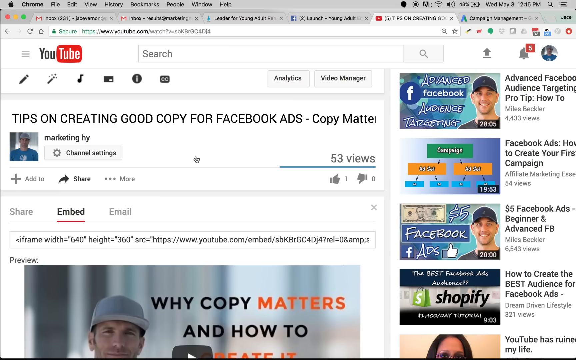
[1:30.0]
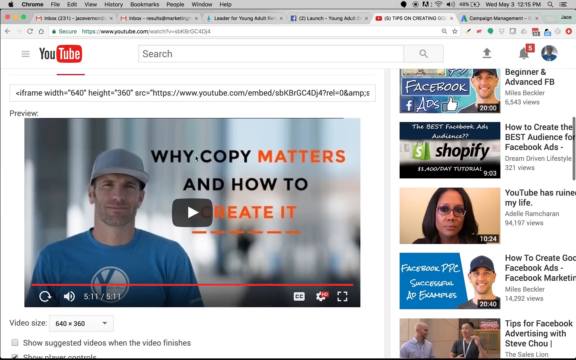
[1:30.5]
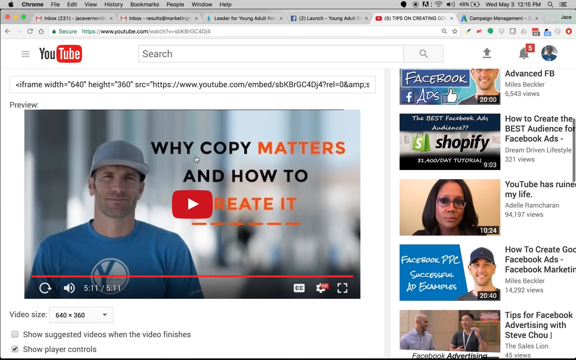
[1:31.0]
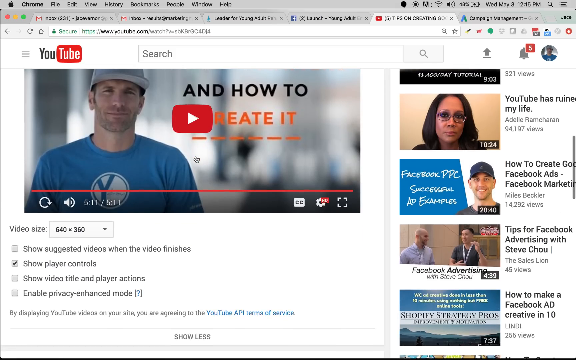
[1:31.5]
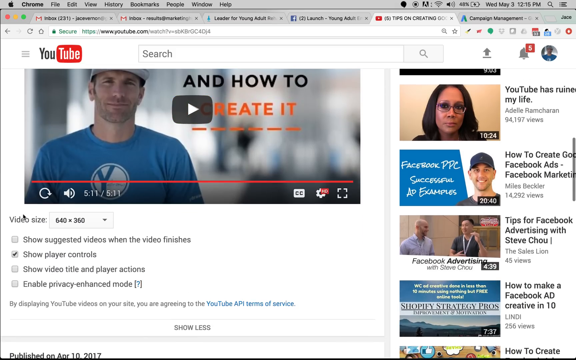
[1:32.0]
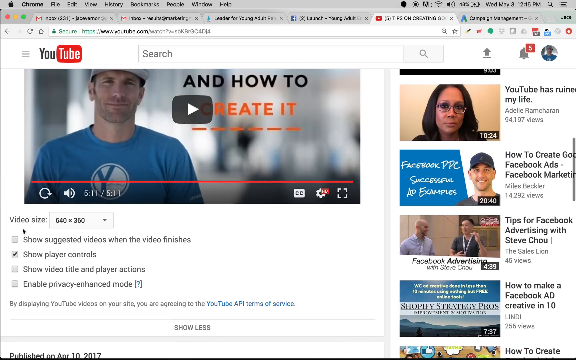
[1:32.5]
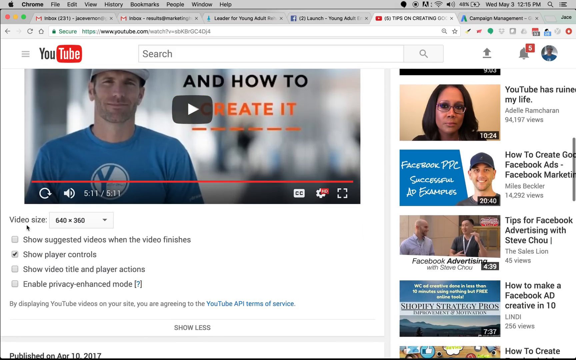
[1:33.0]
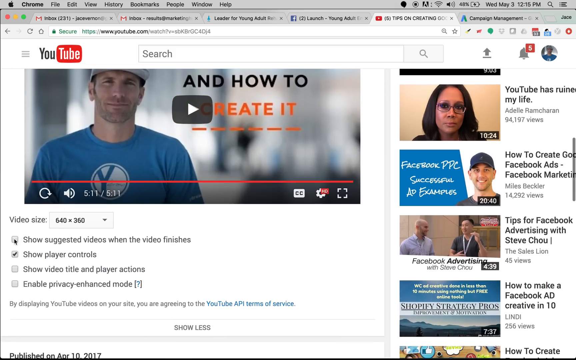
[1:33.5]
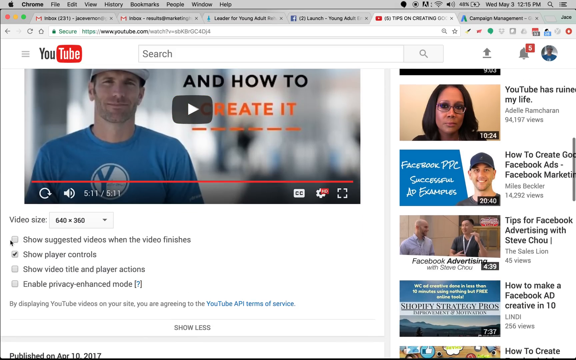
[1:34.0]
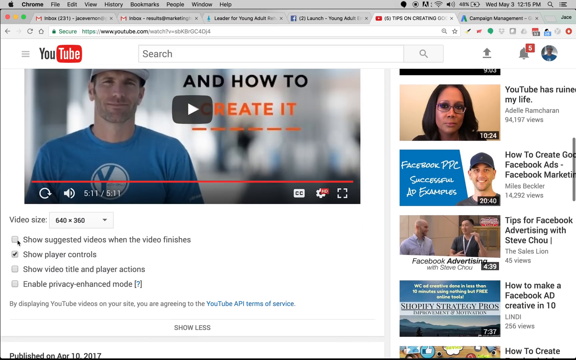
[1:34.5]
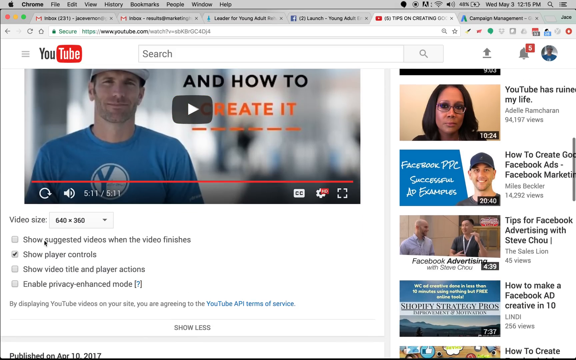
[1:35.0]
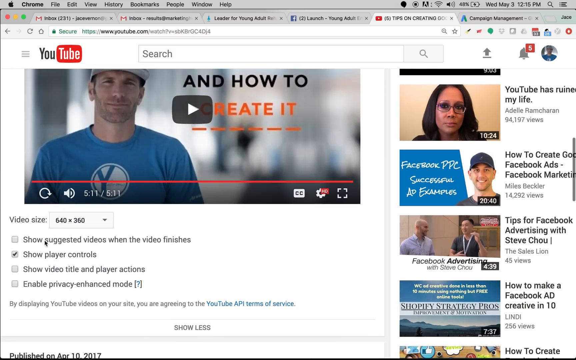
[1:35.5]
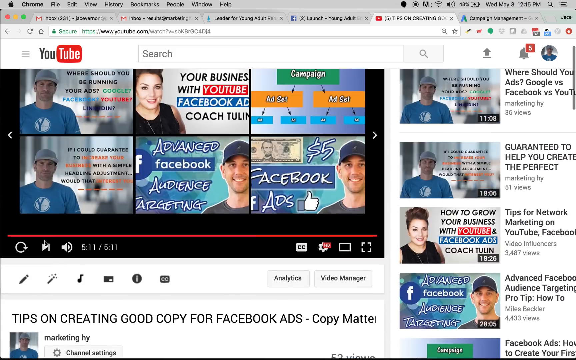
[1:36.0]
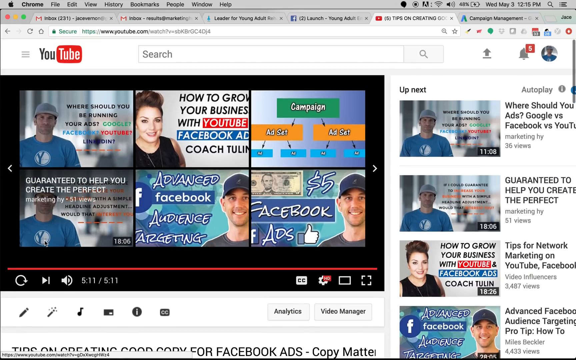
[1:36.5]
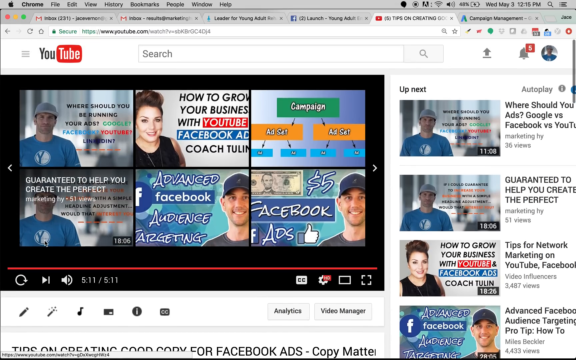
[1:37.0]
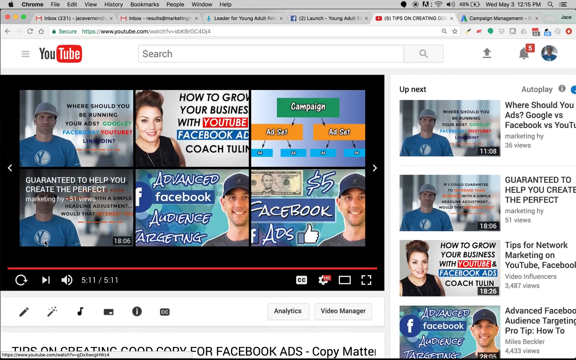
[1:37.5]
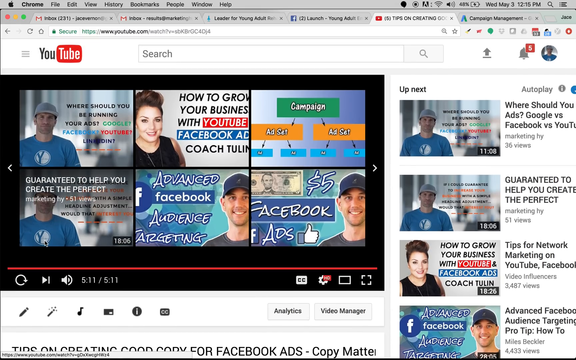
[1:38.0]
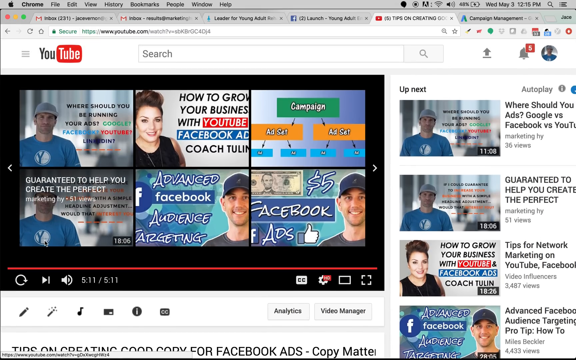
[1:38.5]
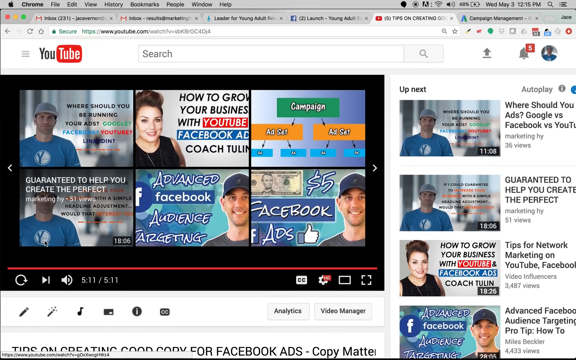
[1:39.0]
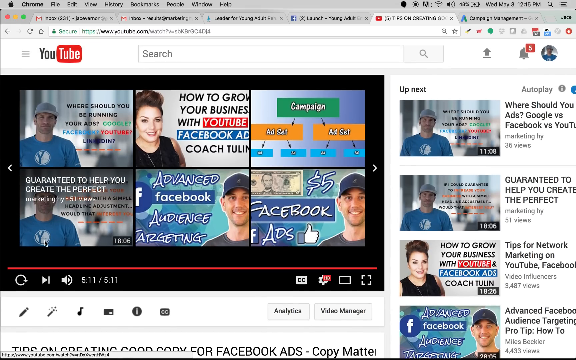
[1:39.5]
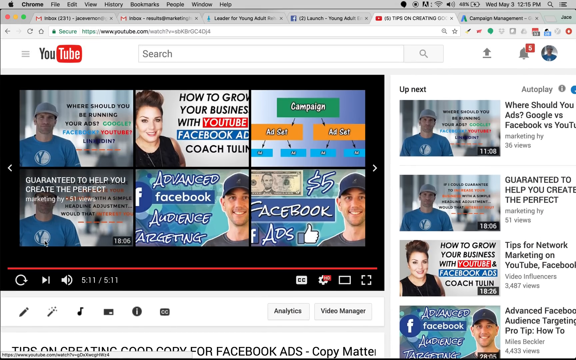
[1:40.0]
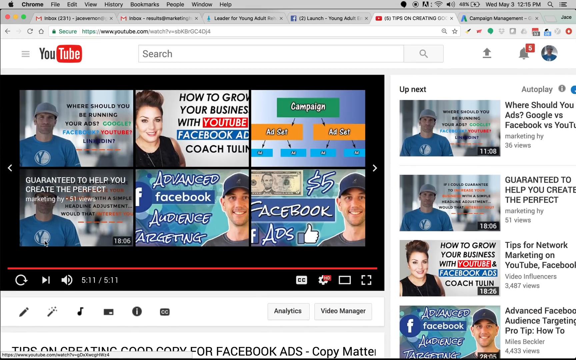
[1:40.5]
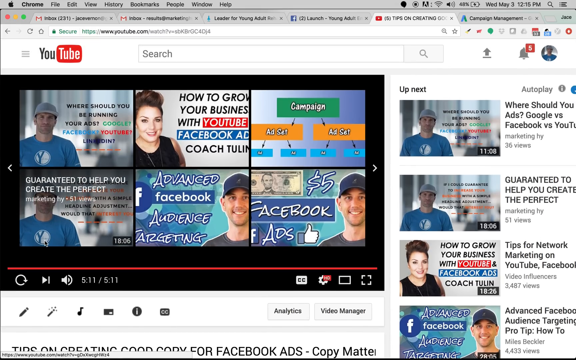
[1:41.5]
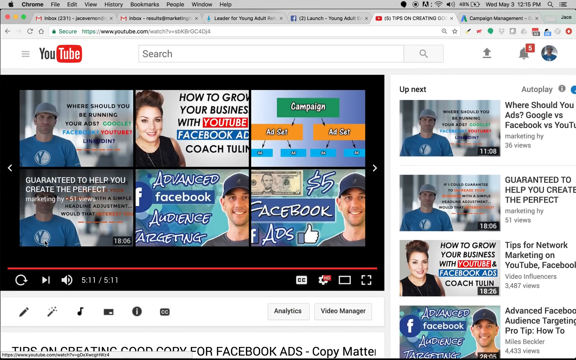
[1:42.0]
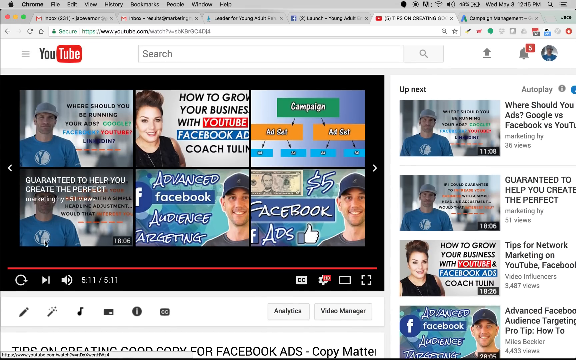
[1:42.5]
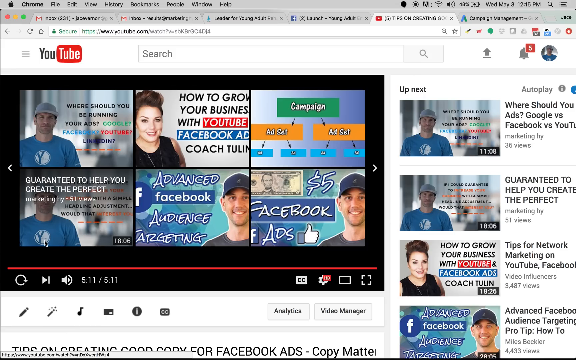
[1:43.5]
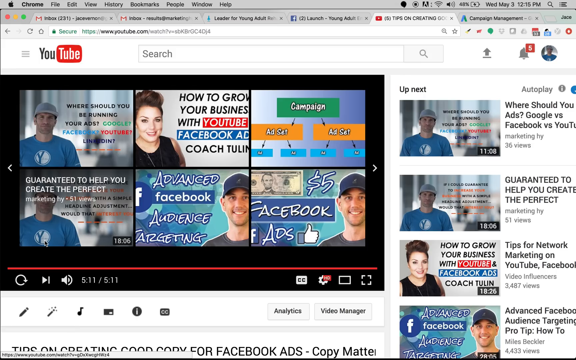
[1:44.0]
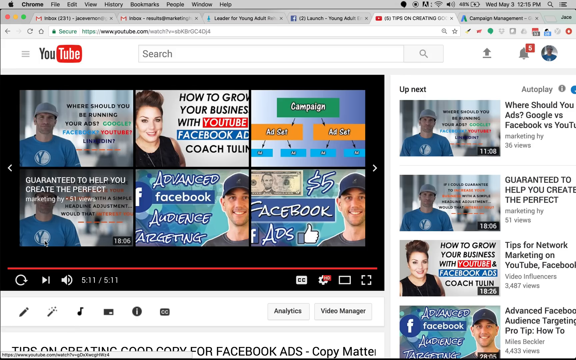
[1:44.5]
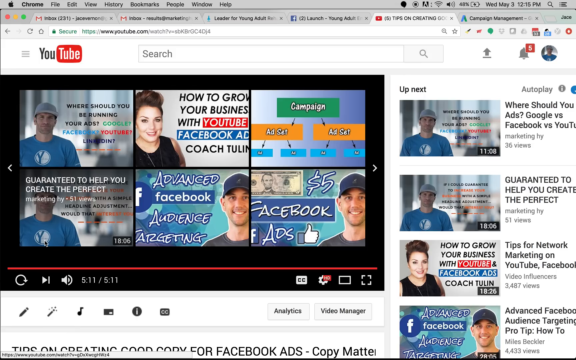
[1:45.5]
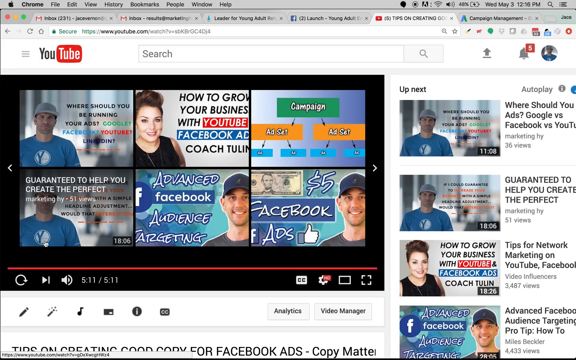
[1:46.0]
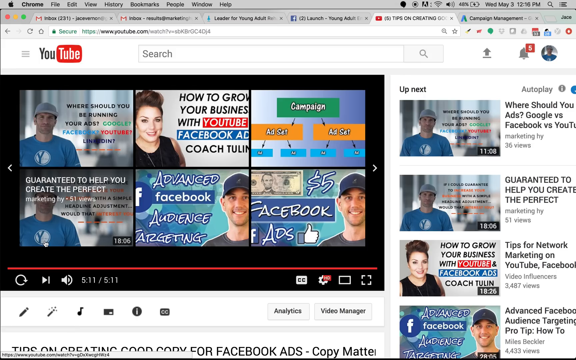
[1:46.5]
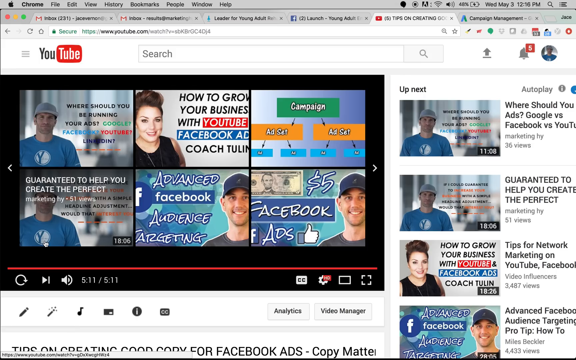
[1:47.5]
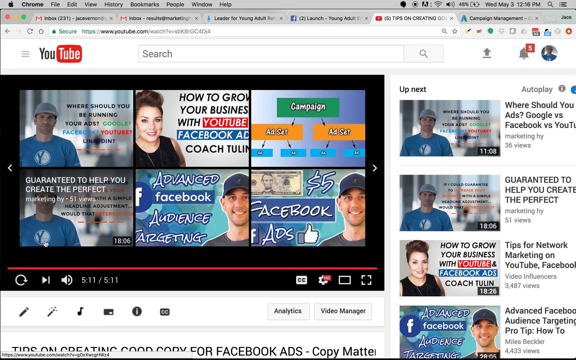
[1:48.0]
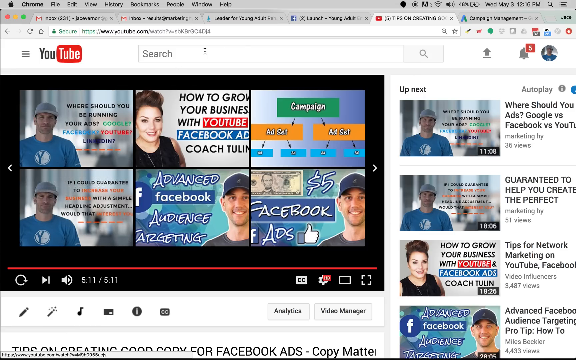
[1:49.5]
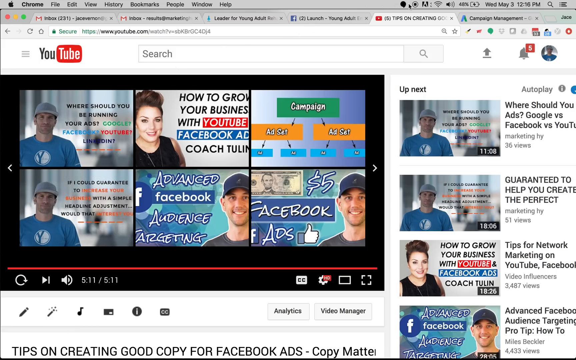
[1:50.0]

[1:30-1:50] Someone is sharing their screen from a laptop, an Apple Mac, as the Apple icon is in the top left-hand corner. Six tabs are open, and the fifth tab is the one being viewed. The sixth tab says "campaign management", possibly on Facebook. The person has opened a video on YouTube and is selecting and deselecting tabs underneath it. On the right-hand side, the videos coming up next are about where to place ads, whether on Google versus Facebook or YouTube, along with lots of other videos relevant to the viewer.